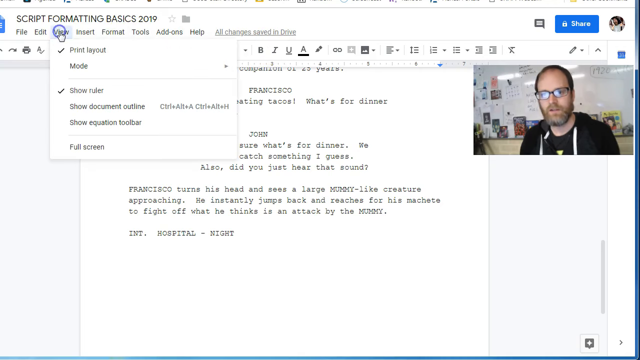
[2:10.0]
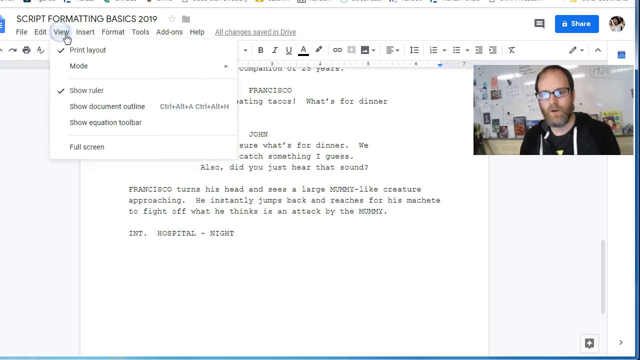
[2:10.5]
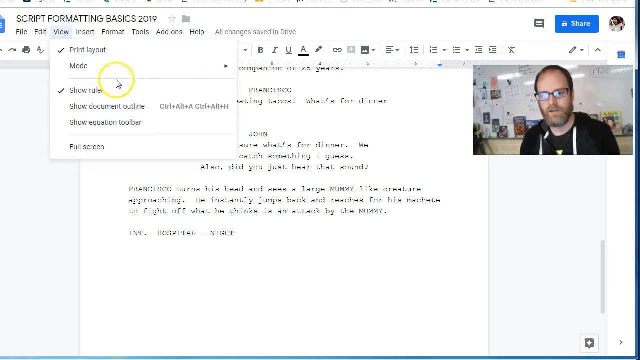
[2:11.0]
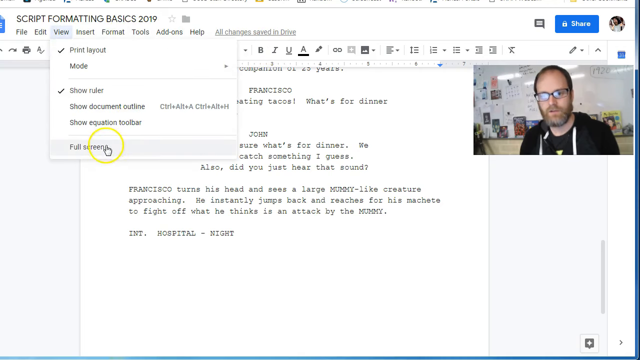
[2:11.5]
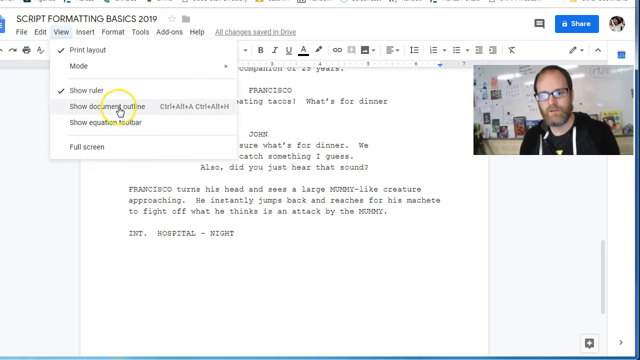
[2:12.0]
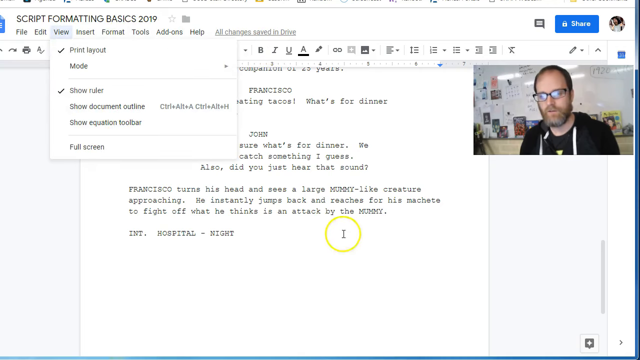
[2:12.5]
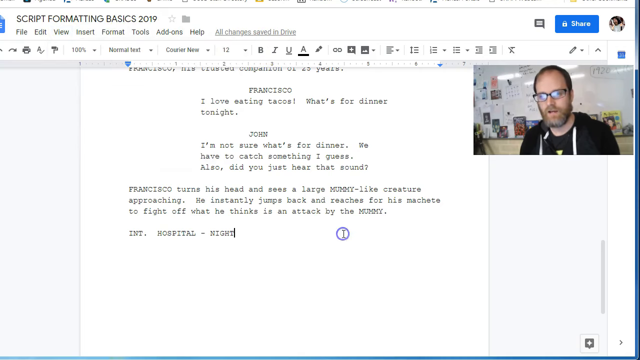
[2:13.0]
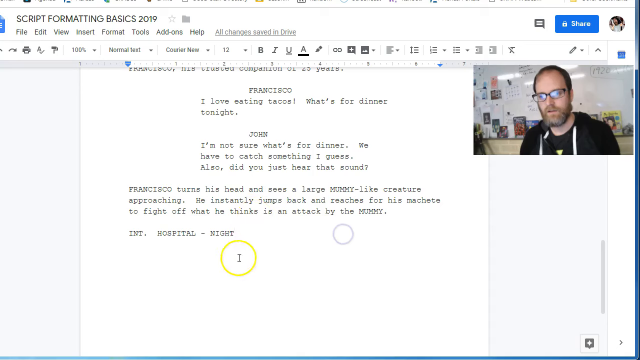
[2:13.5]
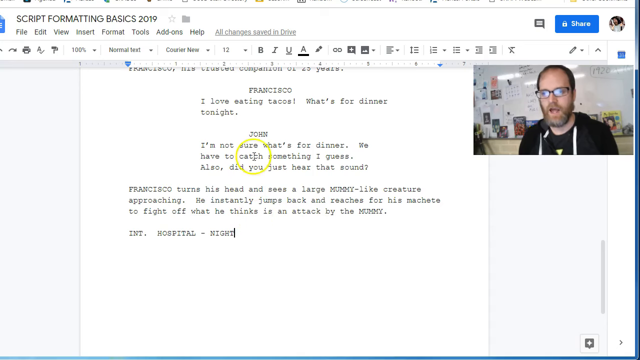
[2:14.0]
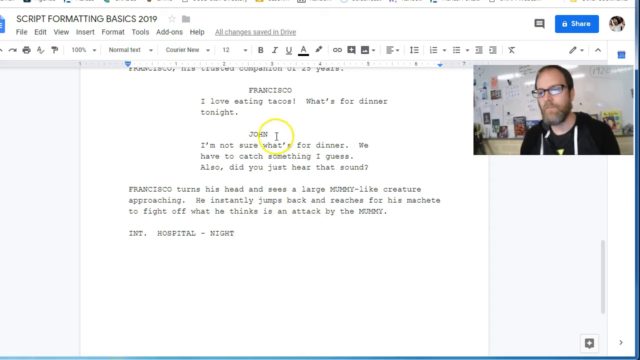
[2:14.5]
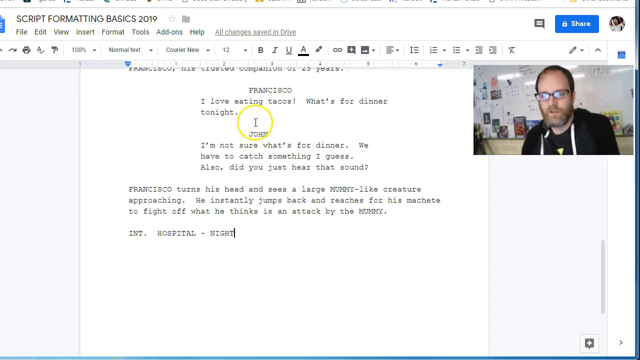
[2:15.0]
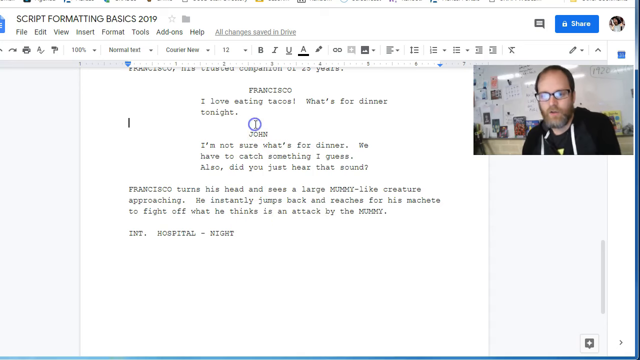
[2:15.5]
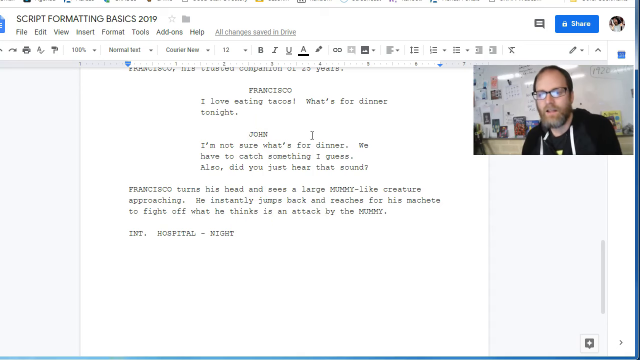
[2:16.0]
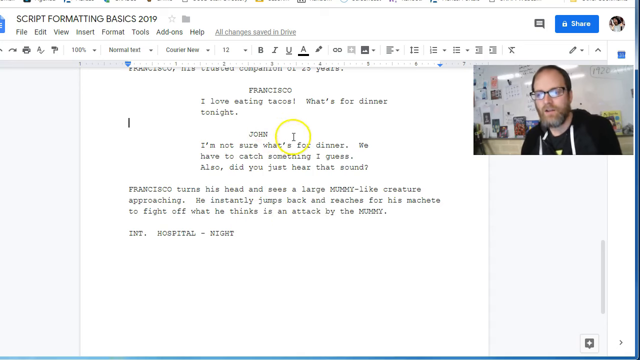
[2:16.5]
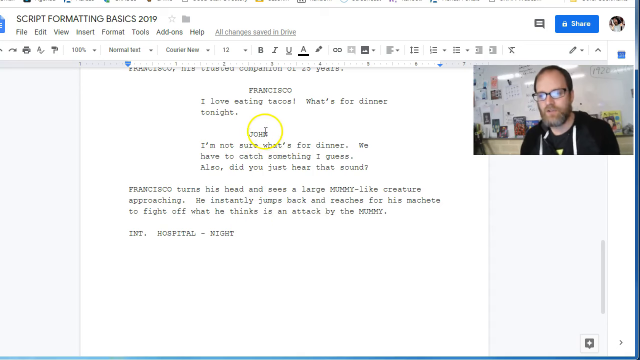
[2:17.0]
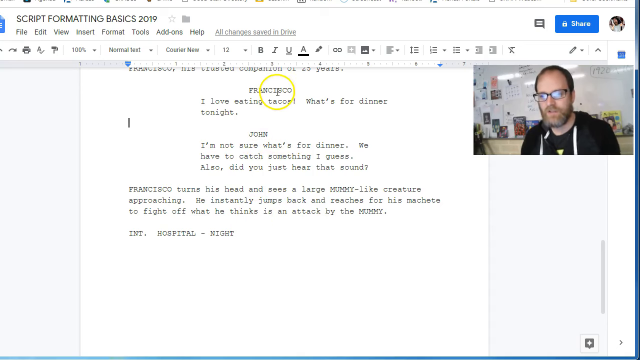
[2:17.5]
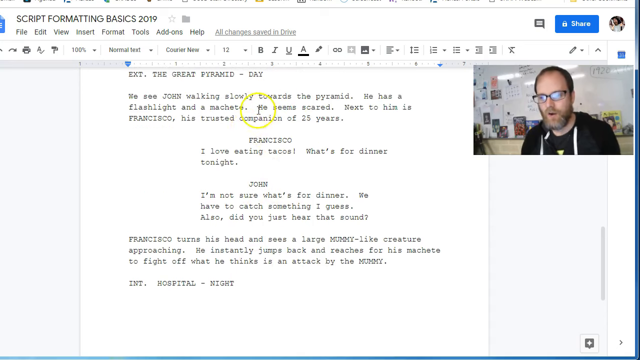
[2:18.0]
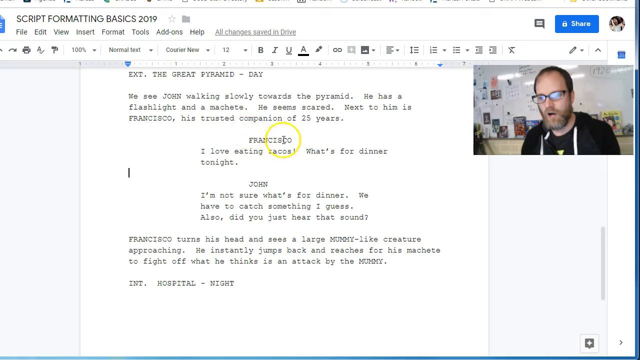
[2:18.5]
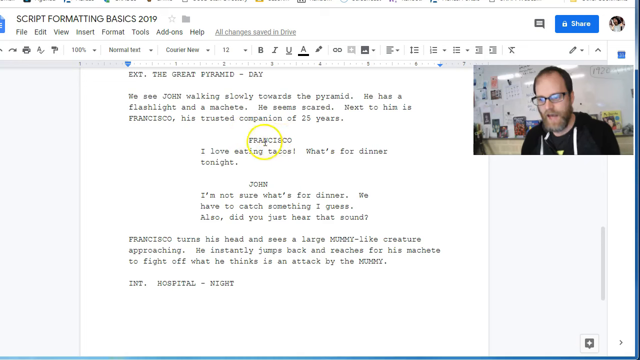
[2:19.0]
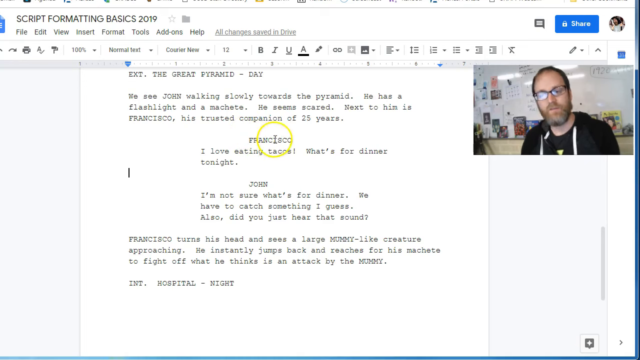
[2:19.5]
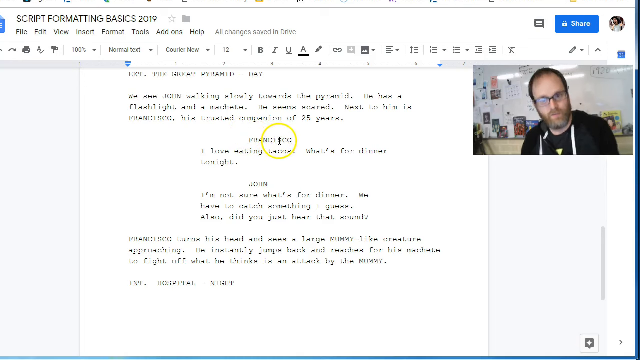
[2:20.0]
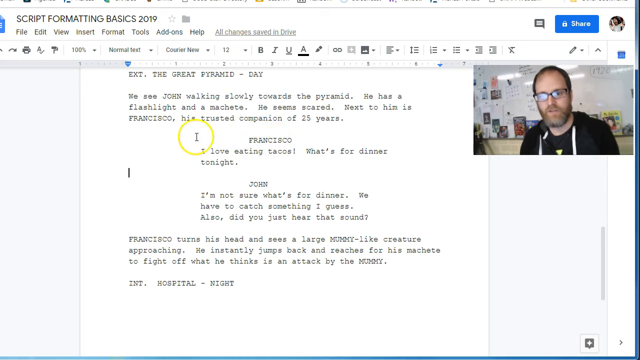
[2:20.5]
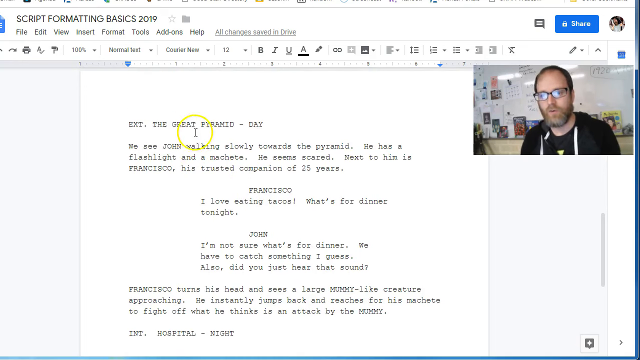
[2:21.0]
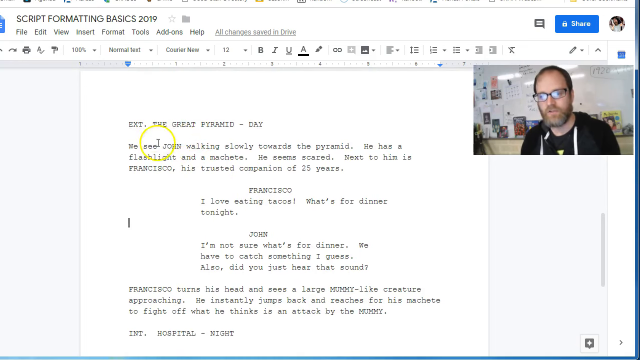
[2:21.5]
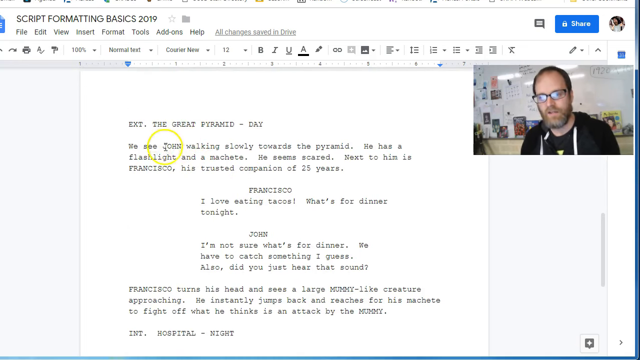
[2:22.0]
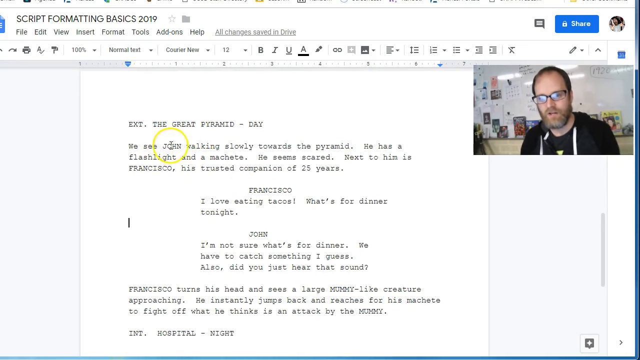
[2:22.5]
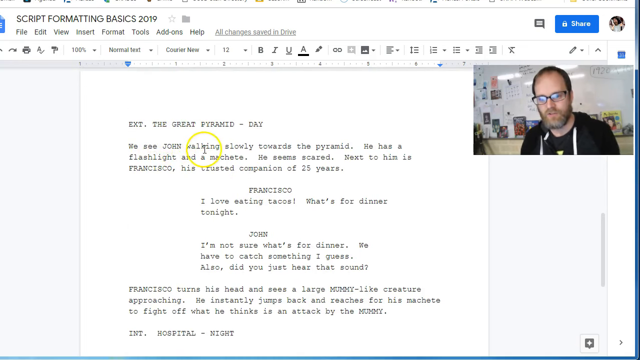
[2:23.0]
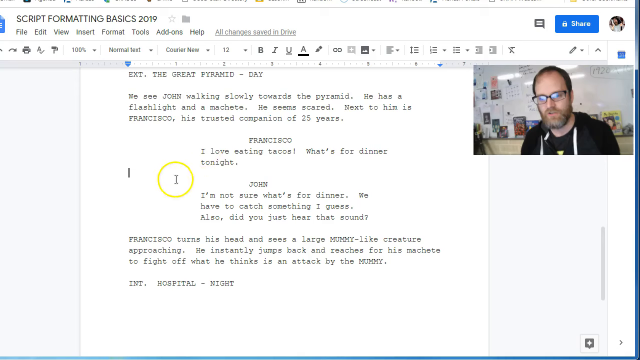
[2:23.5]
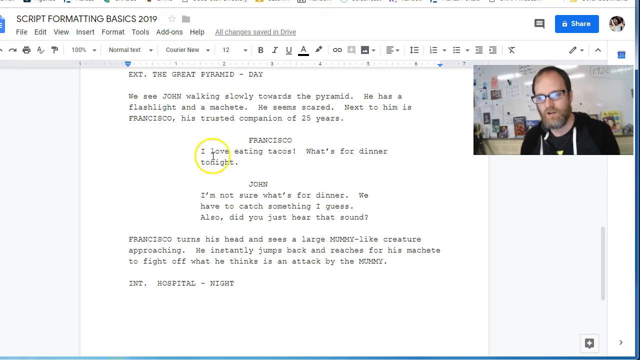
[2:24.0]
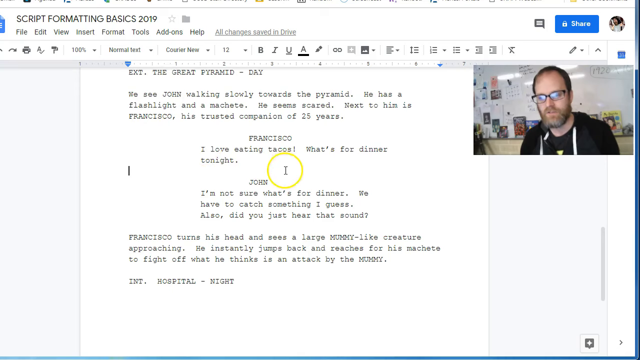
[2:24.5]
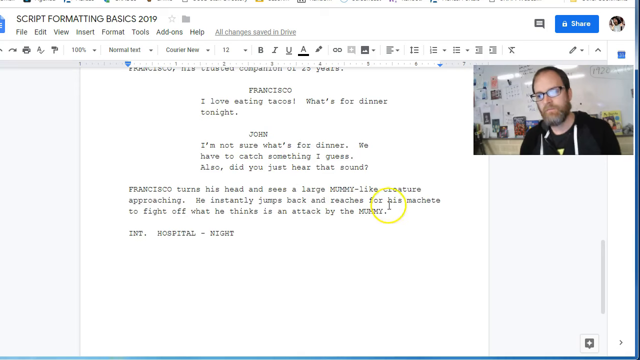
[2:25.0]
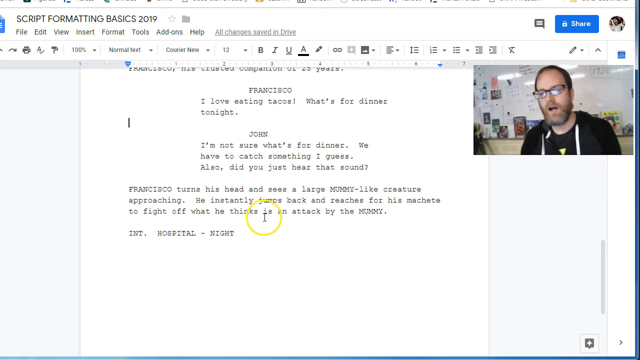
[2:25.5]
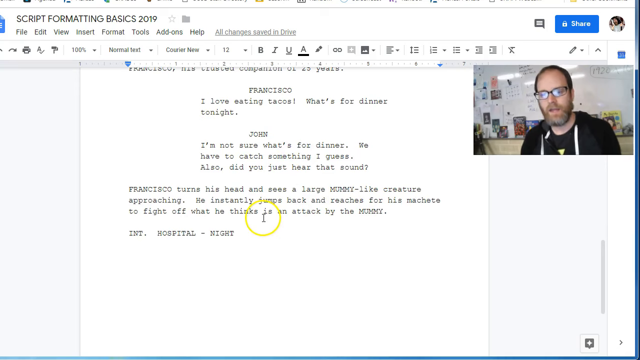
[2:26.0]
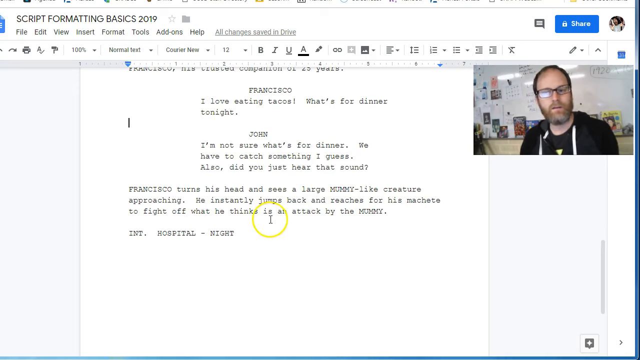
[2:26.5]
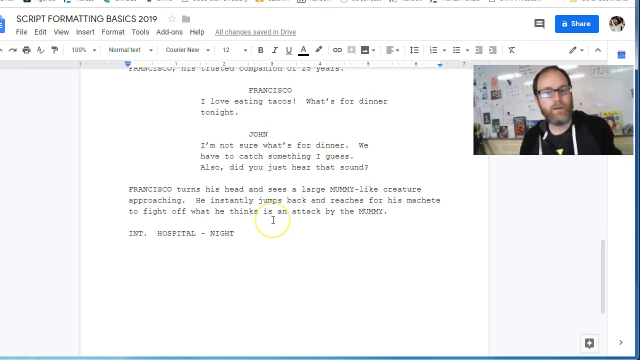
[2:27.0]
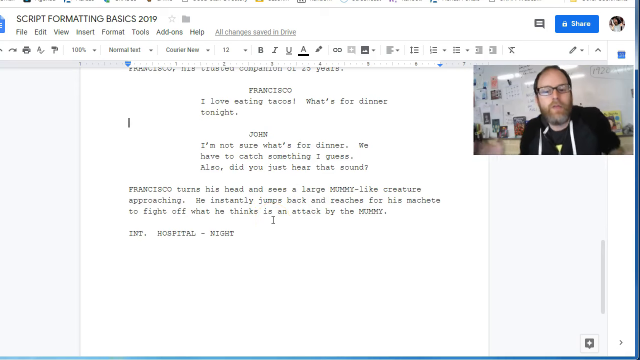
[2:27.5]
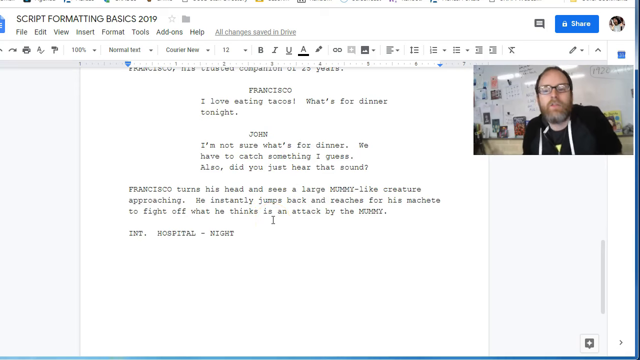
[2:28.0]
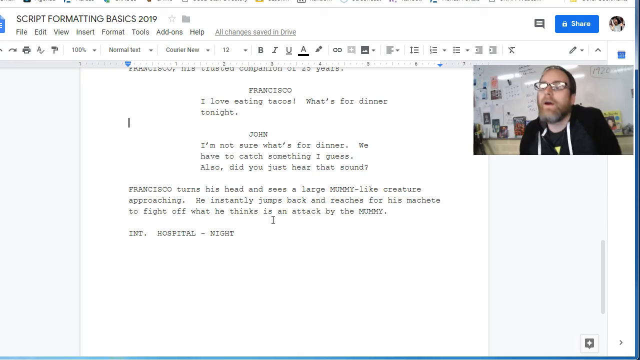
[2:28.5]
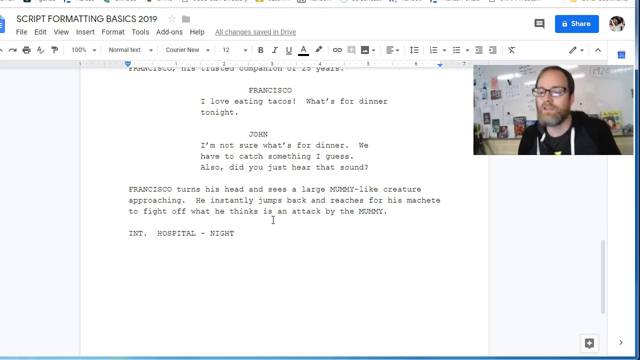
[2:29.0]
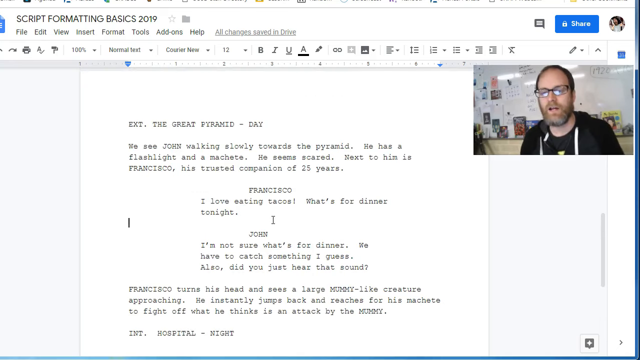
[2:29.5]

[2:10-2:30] The View drop-down is open, with a checkmark by "print layout" and another by "show ruler". Other options below include "show document outline" with a very long shortcut key combination, "show equation toolbar", a faint gray line, and "full screen". He clicks off the menu into the document, with the cursor blinking at "night". He scrolls up slightly to "Francisco", with the yellow circle around the cursor, then scrolls up a bit more to the space between the Great Pyramid and the block of text. He pulls his shoulders in and raises his eyebrows a little. He is very animated, with jerky movements, and works very fast, deleting and indenting over and over.